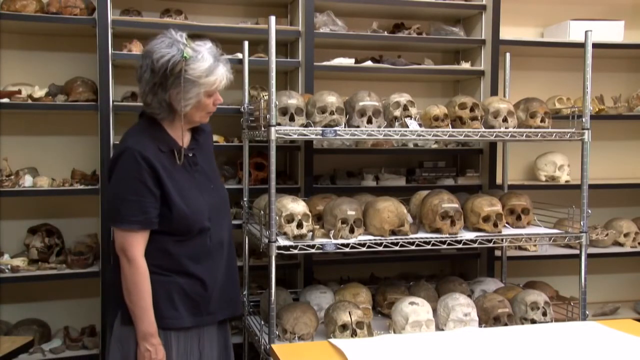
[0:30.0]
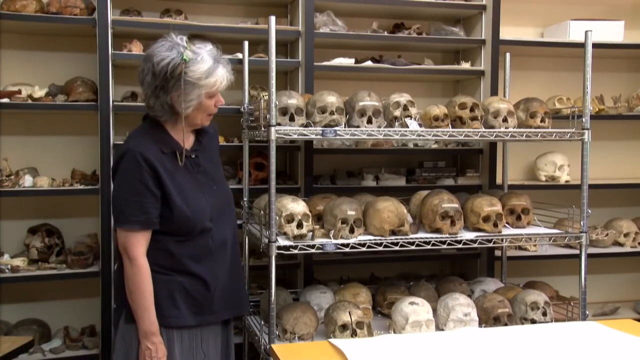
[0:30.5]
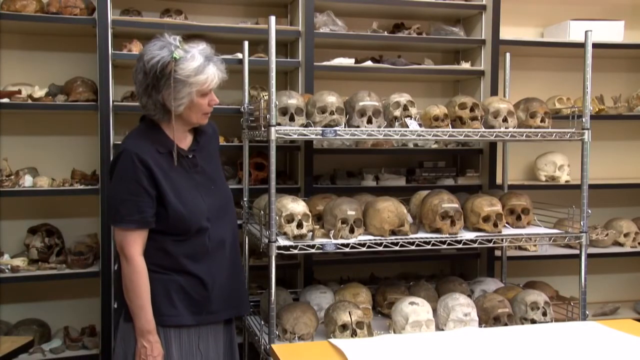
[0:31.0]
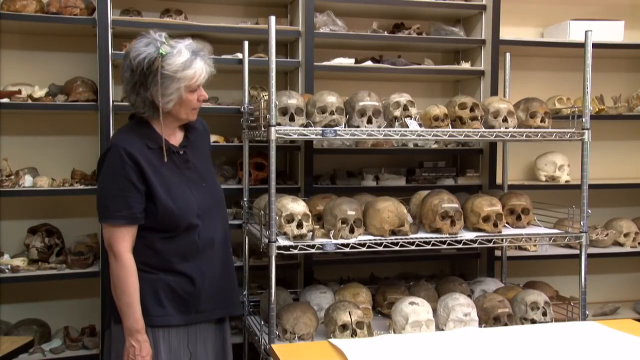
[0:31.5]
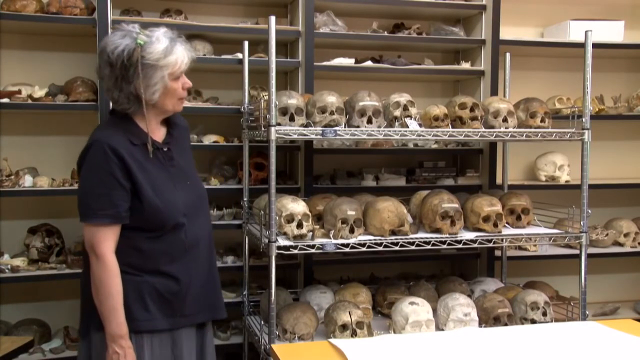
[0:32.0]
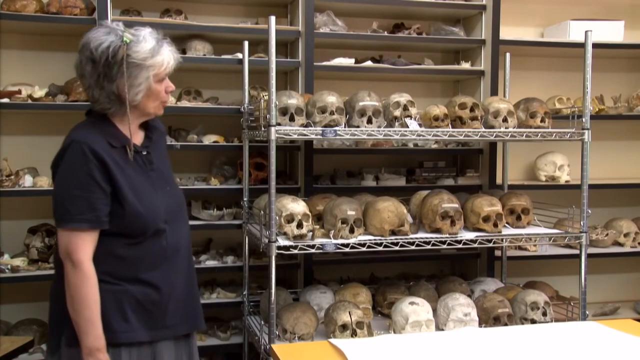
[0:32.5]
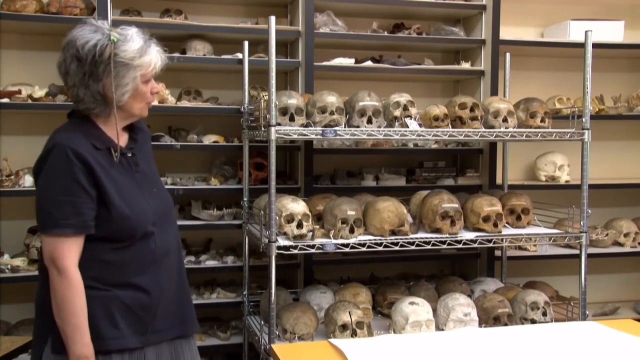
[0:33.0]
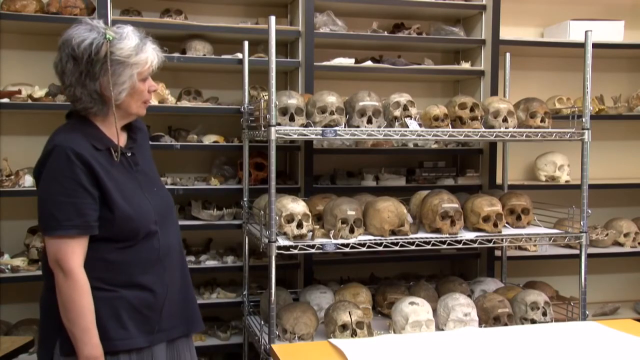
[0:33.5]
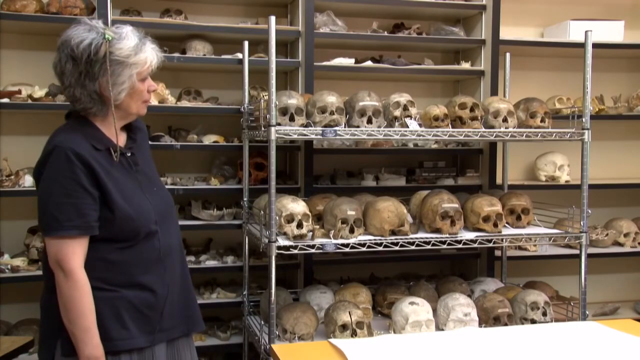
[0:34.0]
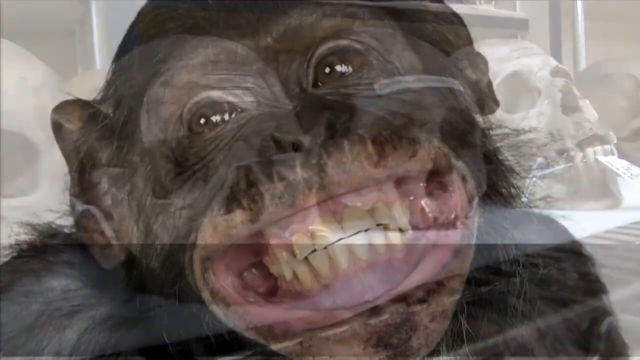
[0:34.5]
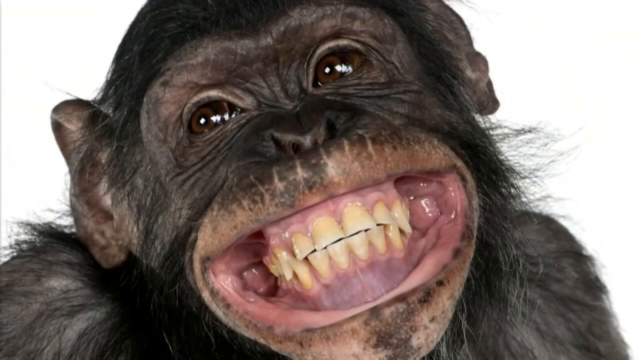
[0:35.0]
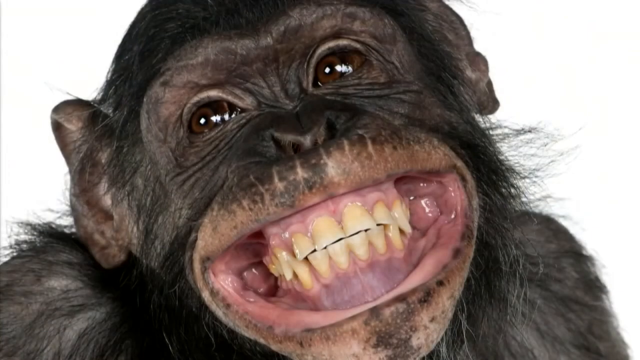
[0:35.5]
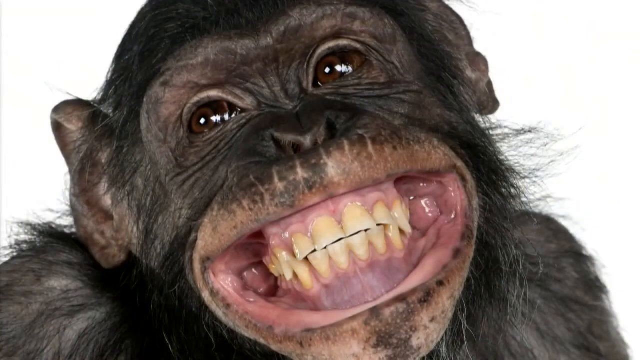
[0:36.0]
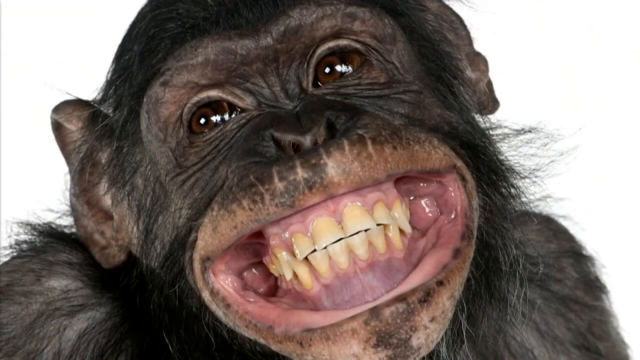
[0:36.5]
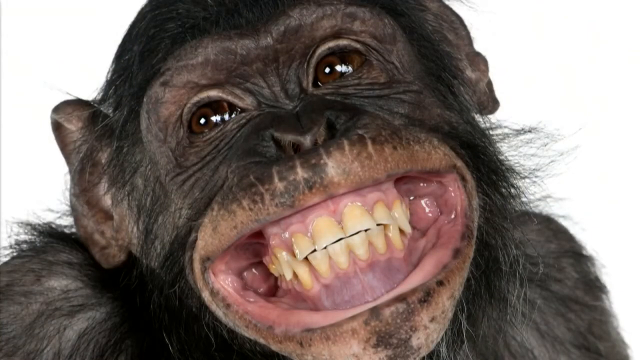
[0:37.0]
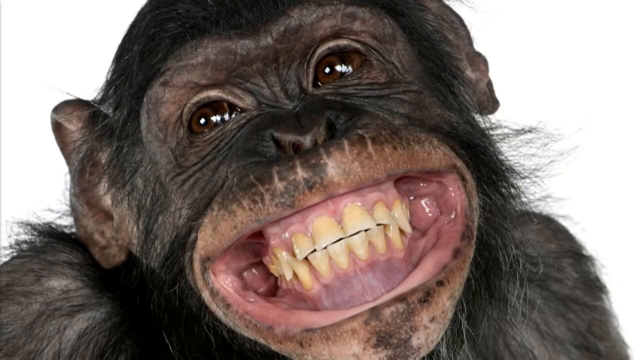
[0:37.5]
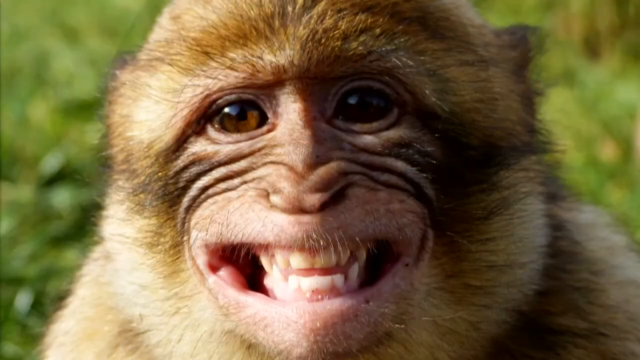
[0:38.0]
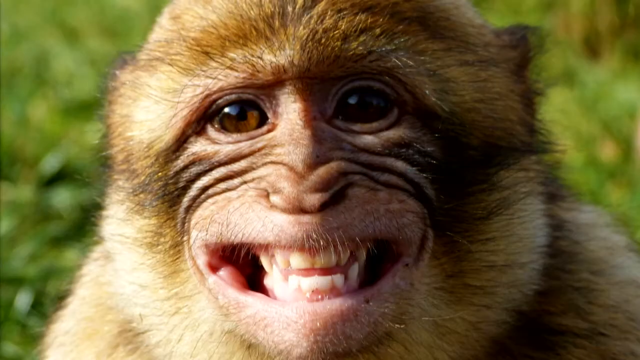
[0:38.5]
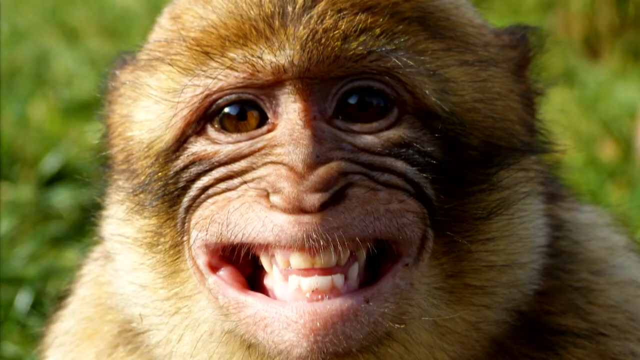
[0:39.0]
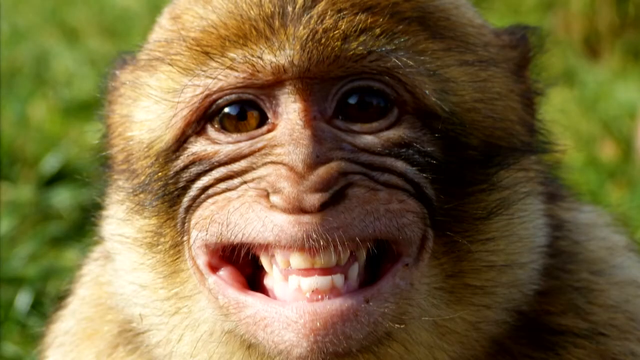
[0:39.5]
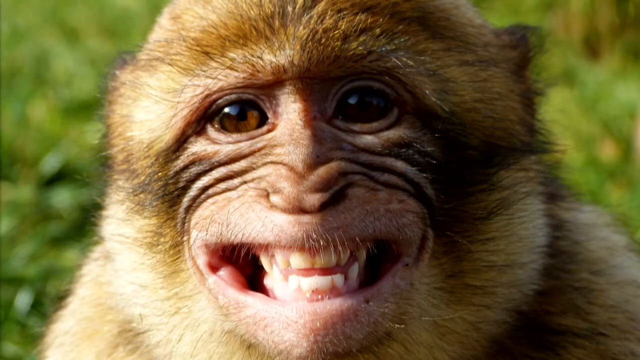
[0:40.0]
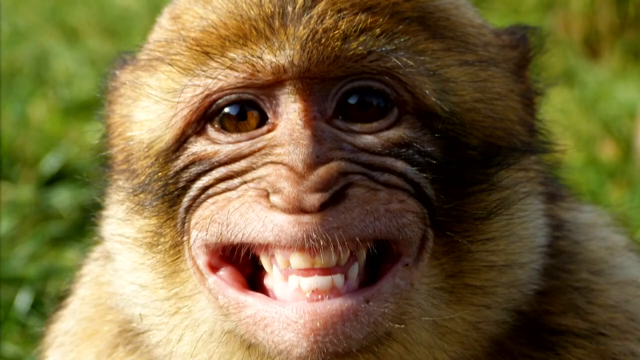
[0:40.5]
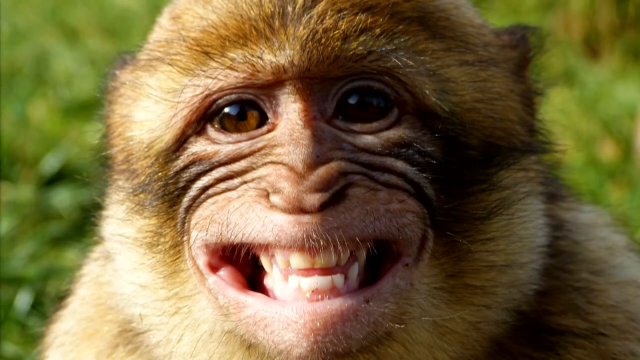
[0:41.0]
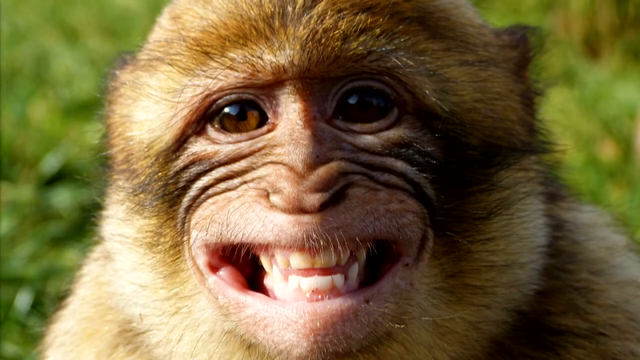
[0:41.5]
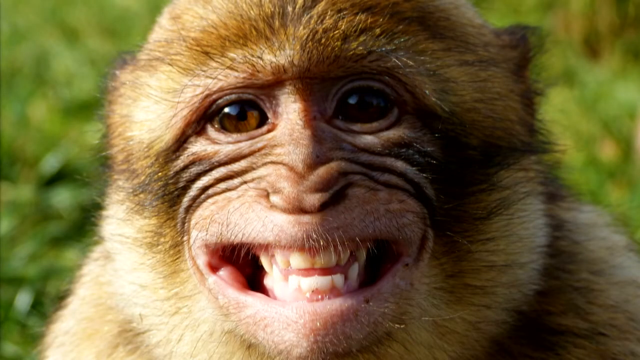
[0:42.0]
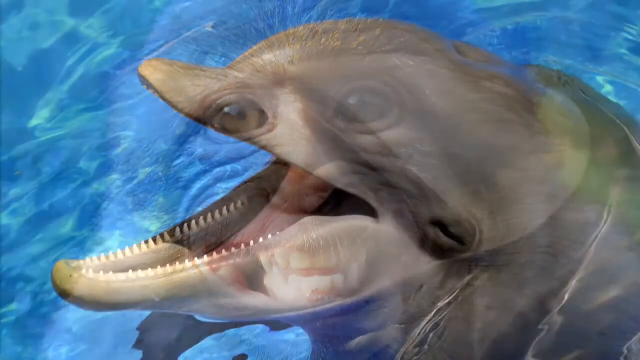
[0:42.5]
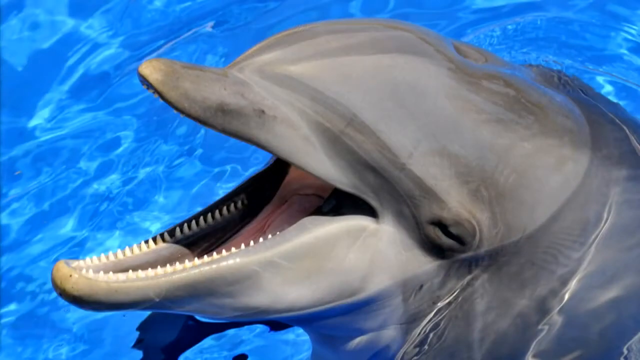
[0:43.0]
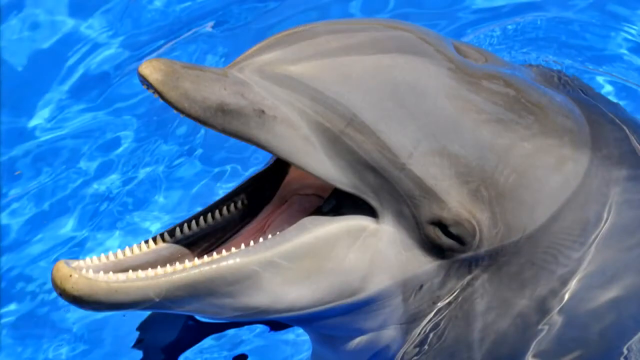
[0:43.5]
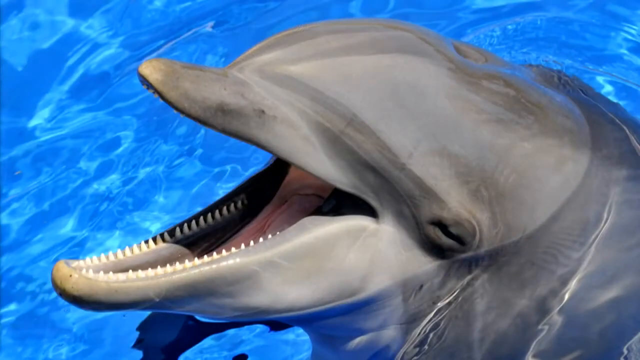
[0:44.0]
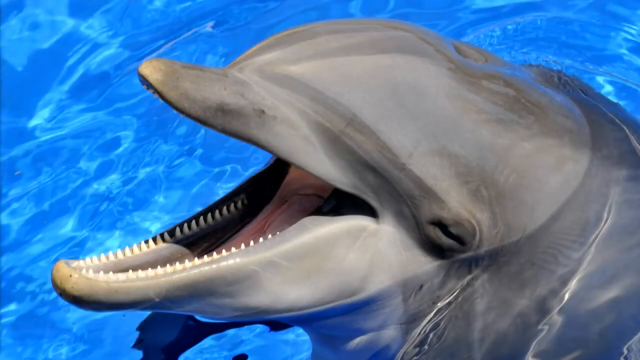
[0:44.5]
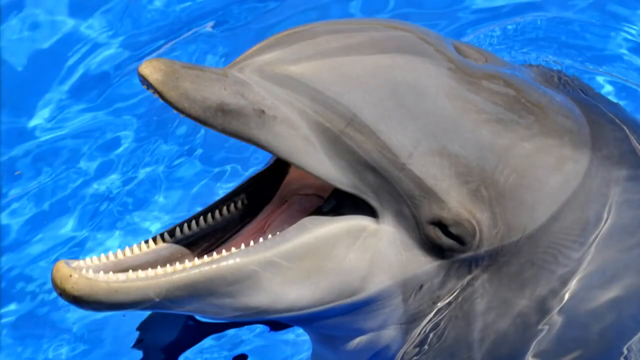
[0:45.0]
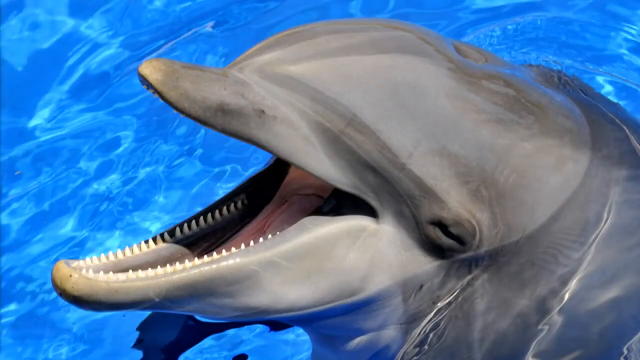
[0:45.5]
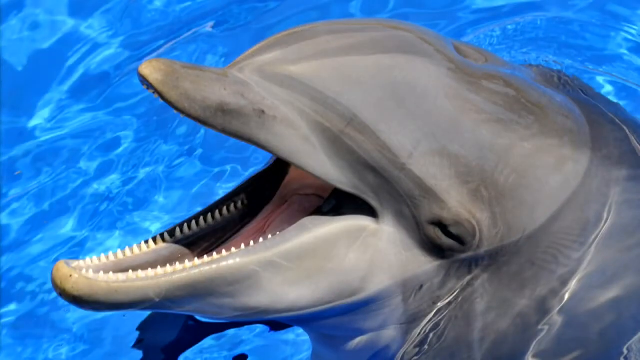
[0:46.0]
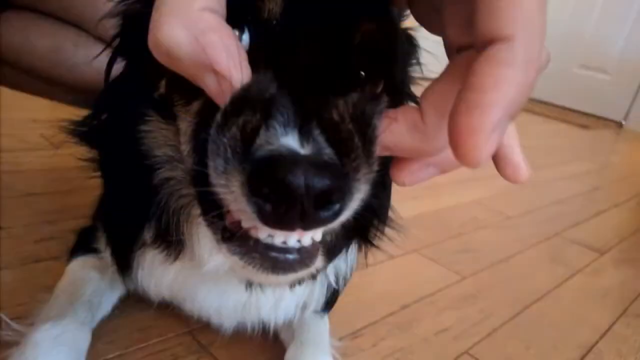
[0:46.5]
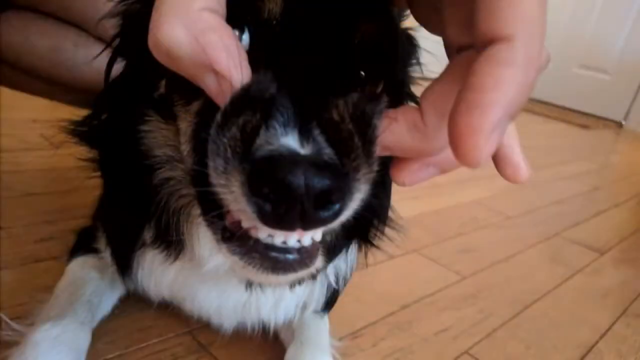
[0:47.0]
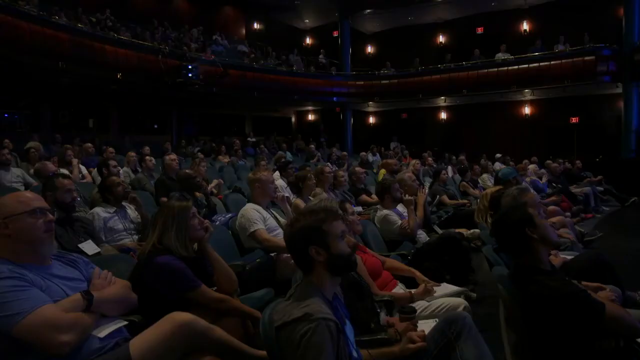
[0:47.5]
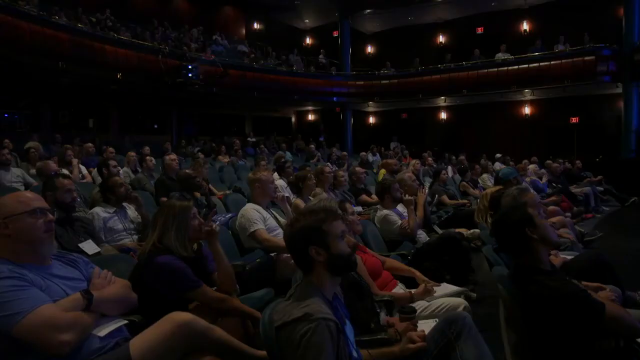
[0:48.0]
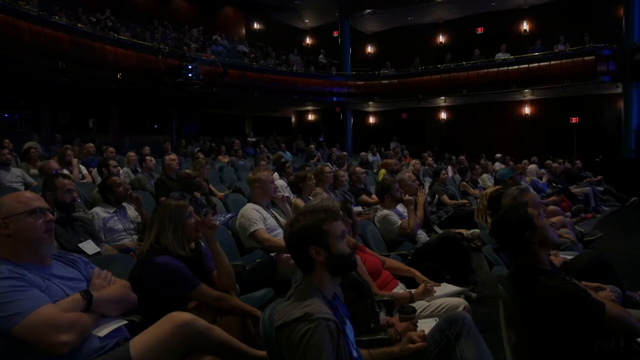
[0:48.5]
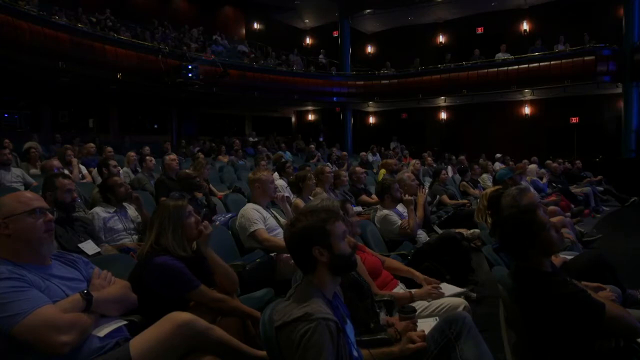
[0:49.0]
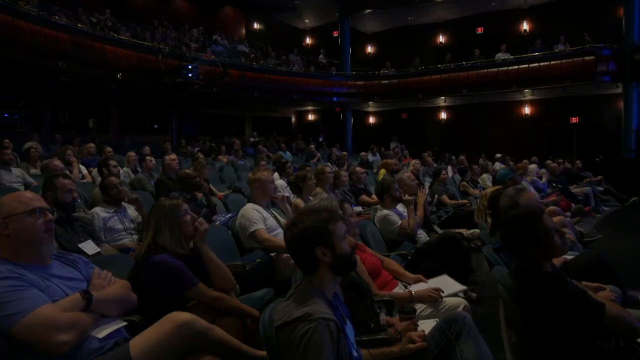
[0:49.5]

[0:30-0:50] A woman stands on the left side of the frame. She has white hair and wears a black polo. Her right arm is resting, pointing down on the right side of her body, and she looks toward the right side of the frame. Behind her are shelves full of human skulls, and to her right are metal shelves full of human skulls. She speaks and fidgets on her feet, walking back and forth. Meanwhile, the video shows an image of the skulls on the shelf and then fades to an image of a chimpanzee smiling in the direction of the camera, baring its teeth and looking up and to the left. Next is another monkey in the wilderness or outside, with light flashing down on the right side of its face; the monkey is brown and smiles in the direction of the camera. The video then fades to an image of a dolphin in very blue water. The dolphin faces the left side of the frame, its eye closed but its mouth wide open, showing its teeth as it dips its head out of the water and smiles. The video switches to an image of a person with their dog, holding the dog's mouth into a smile by grabbing the dog's lips on either side of its head with their thumbs and middle fingers. The dog is black and white and faces the viewer. The video shifts to a recording of people in a darkened auditorium. There are at least 50 to 100 people, sitting in green seats and looking up and to the right.